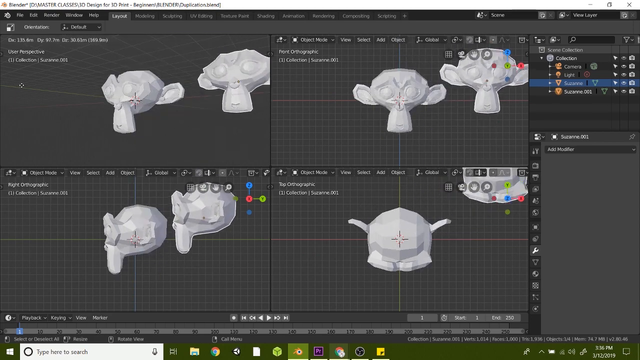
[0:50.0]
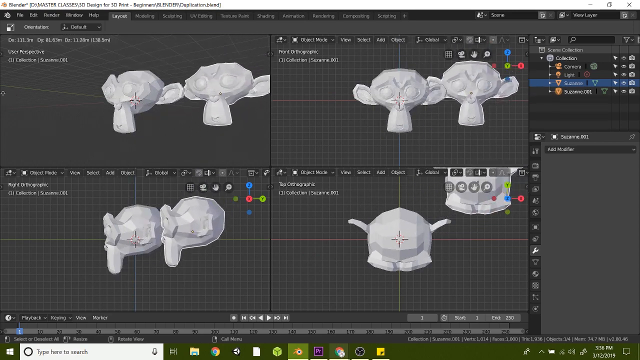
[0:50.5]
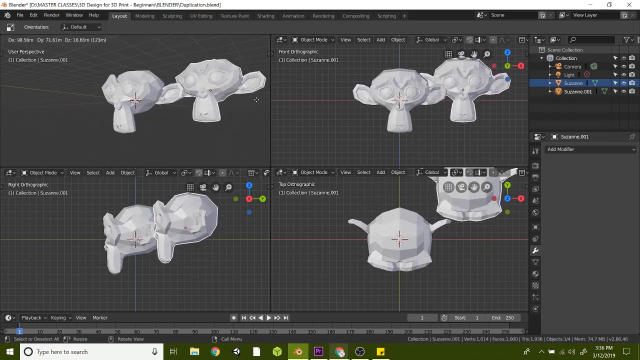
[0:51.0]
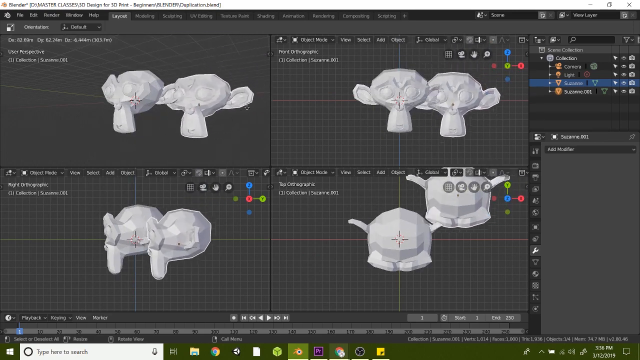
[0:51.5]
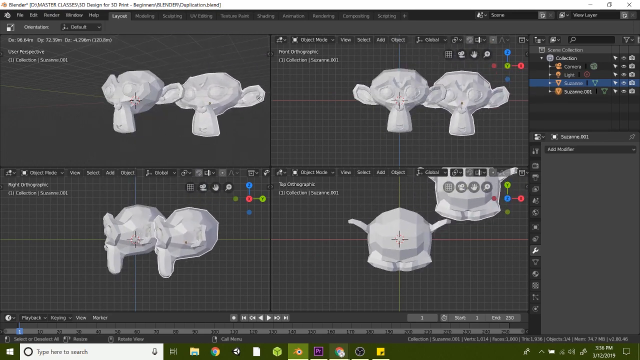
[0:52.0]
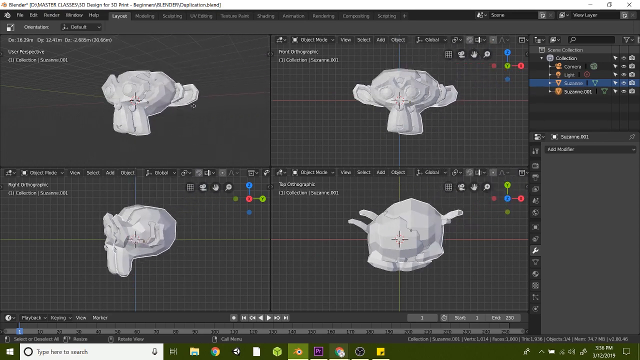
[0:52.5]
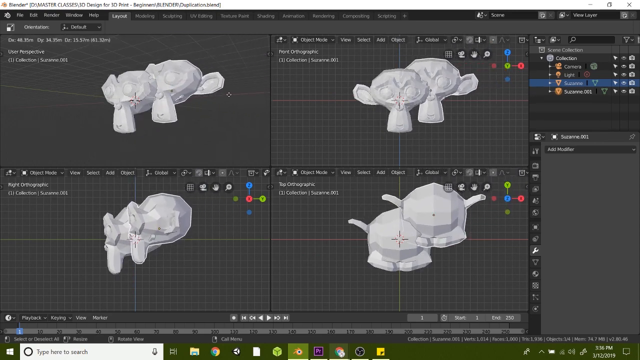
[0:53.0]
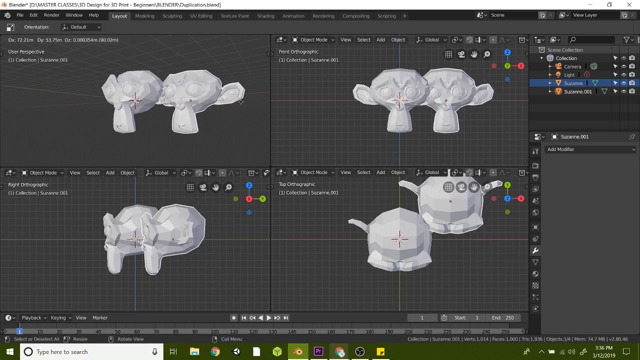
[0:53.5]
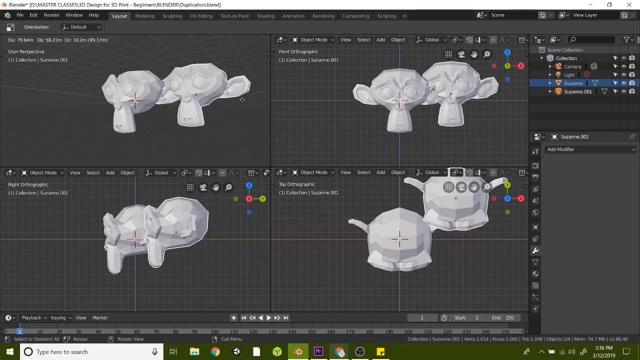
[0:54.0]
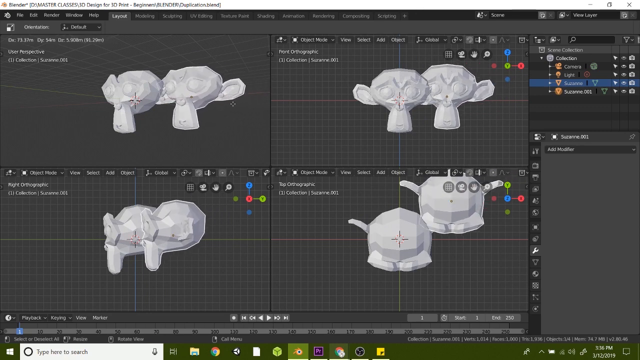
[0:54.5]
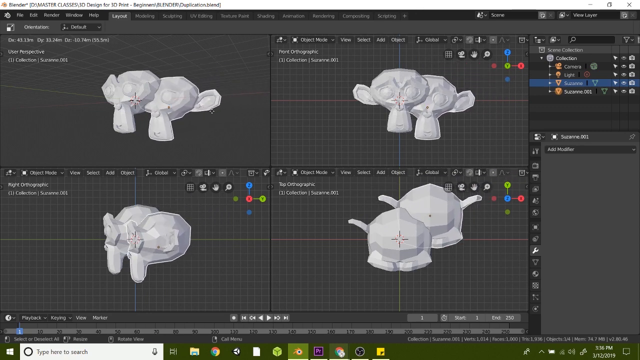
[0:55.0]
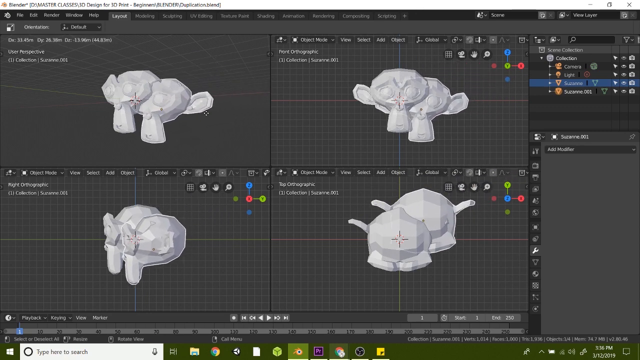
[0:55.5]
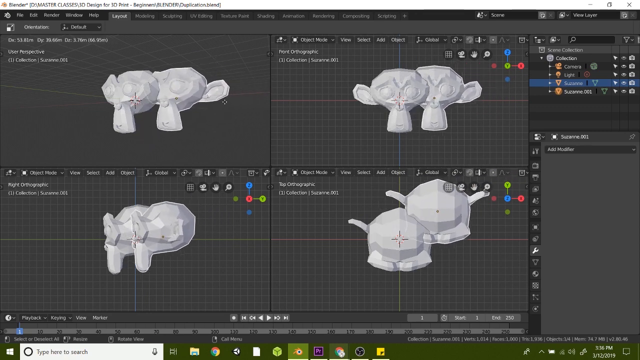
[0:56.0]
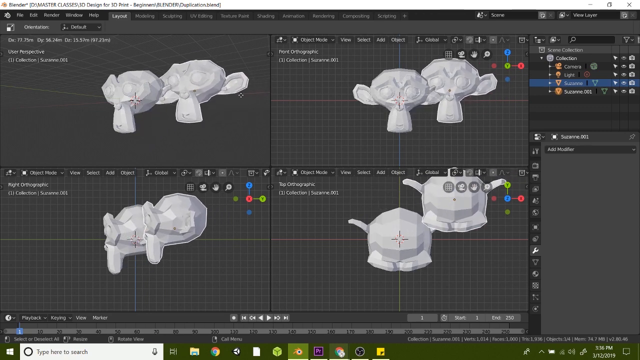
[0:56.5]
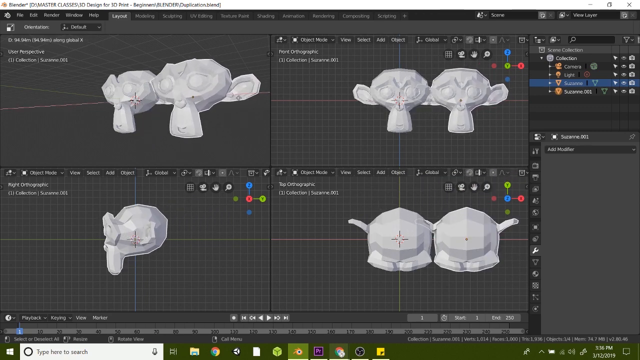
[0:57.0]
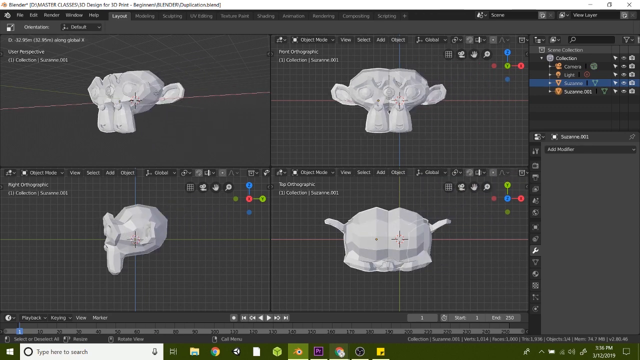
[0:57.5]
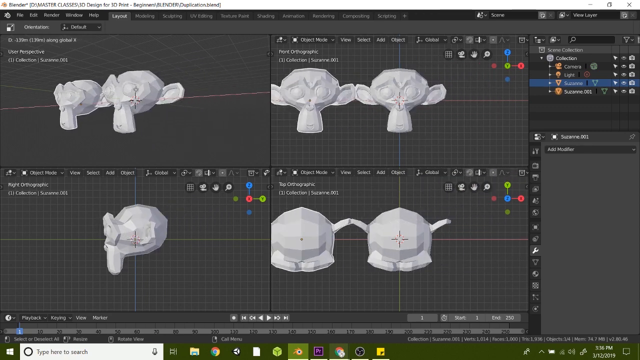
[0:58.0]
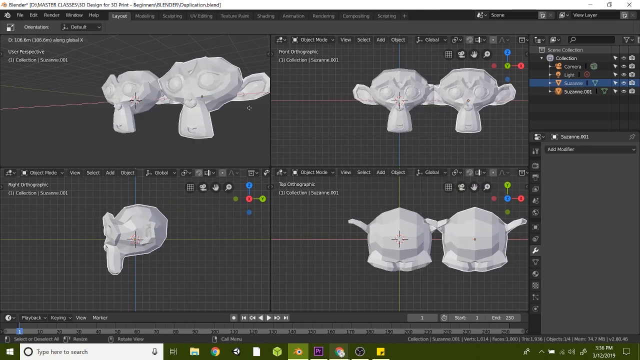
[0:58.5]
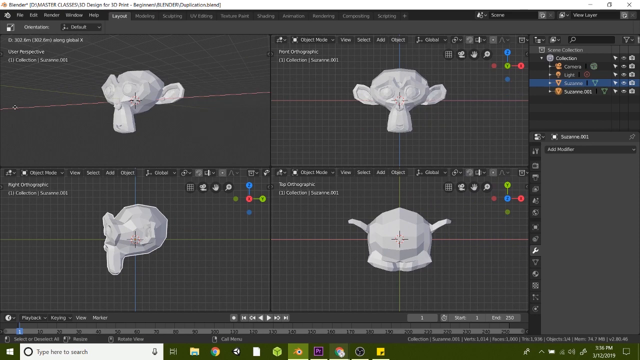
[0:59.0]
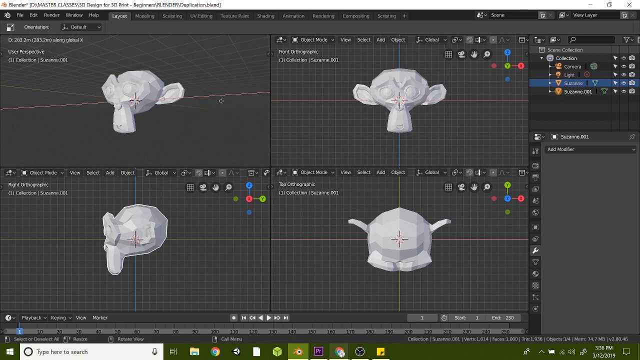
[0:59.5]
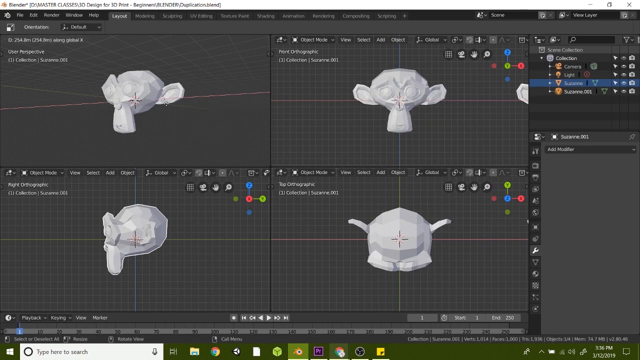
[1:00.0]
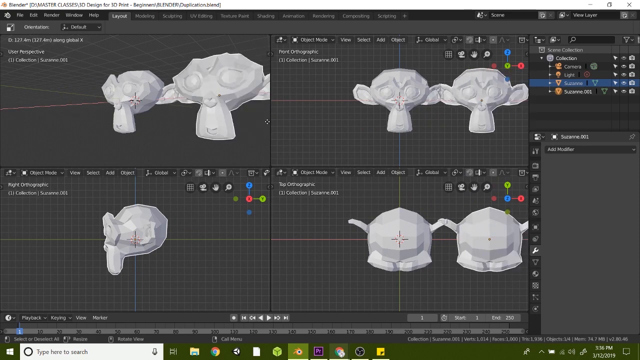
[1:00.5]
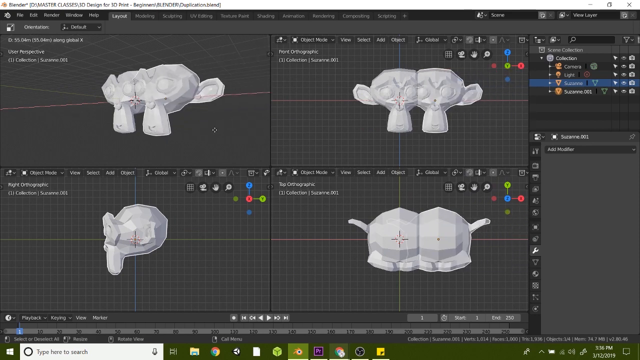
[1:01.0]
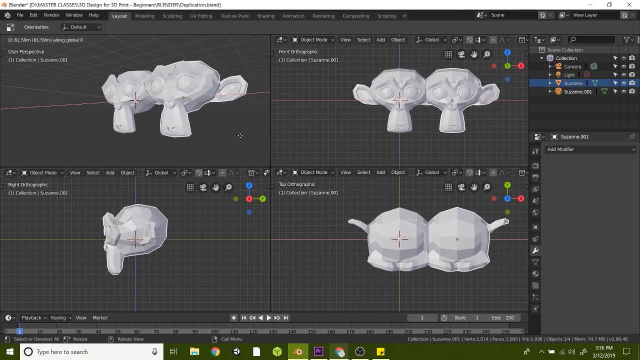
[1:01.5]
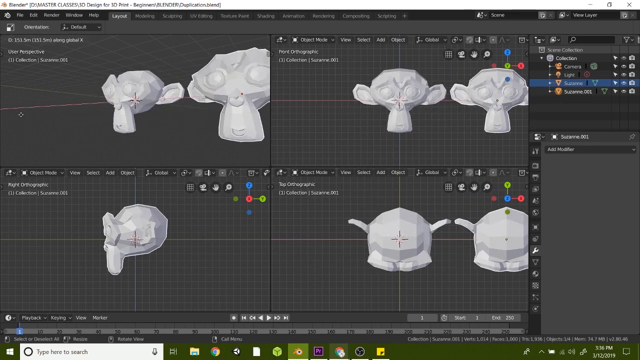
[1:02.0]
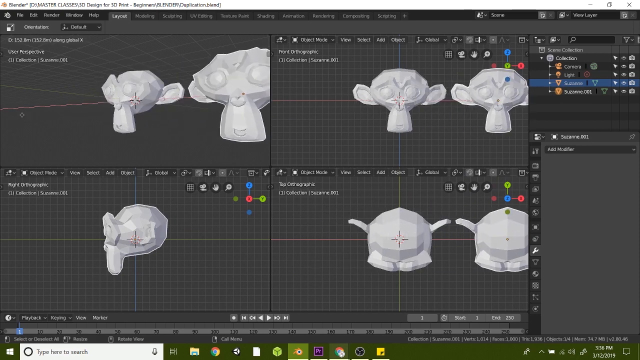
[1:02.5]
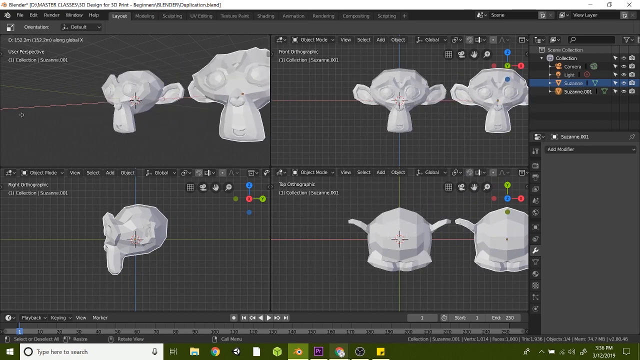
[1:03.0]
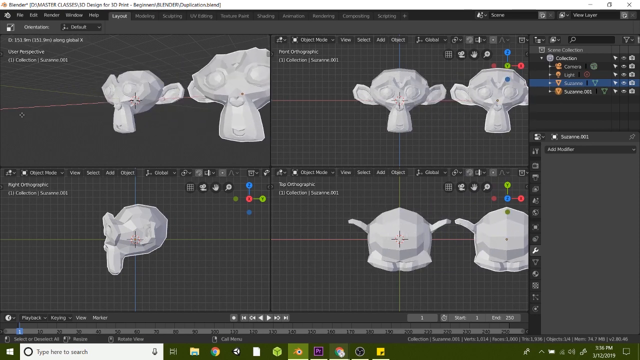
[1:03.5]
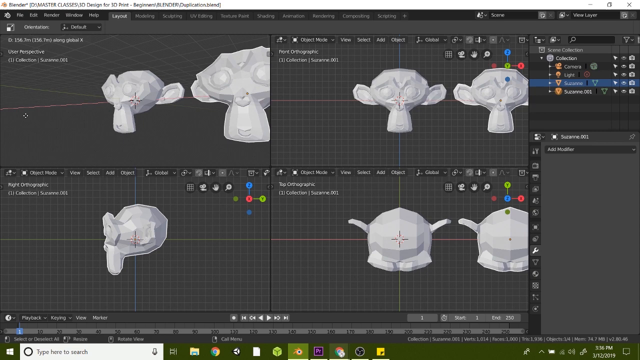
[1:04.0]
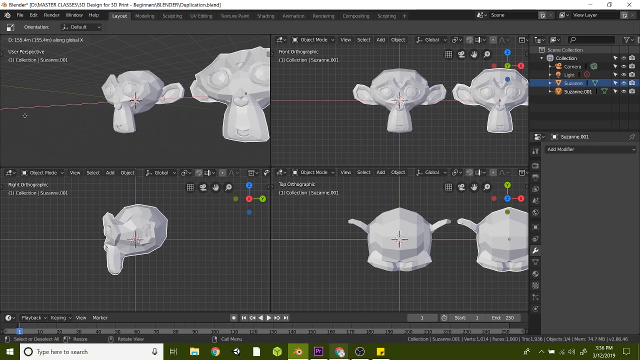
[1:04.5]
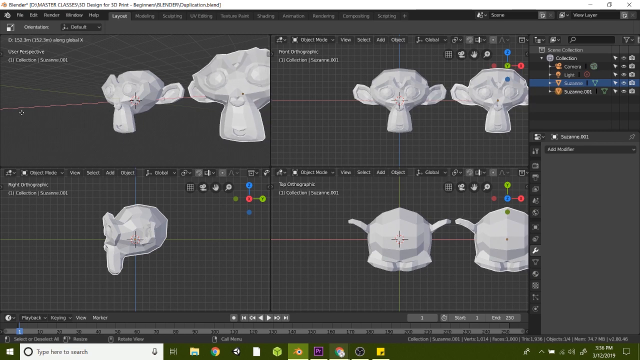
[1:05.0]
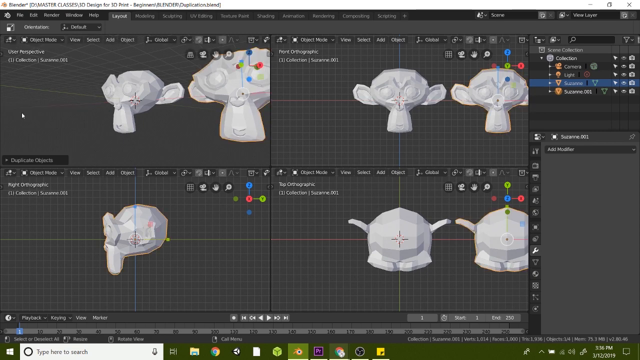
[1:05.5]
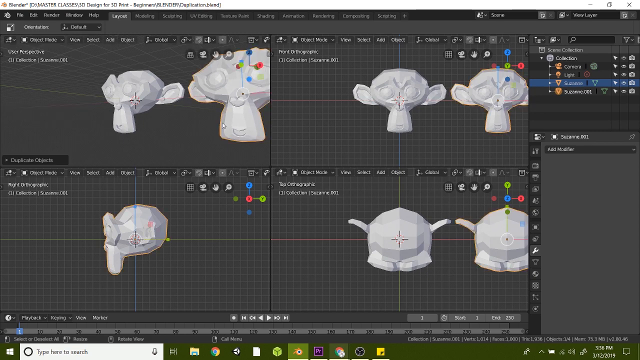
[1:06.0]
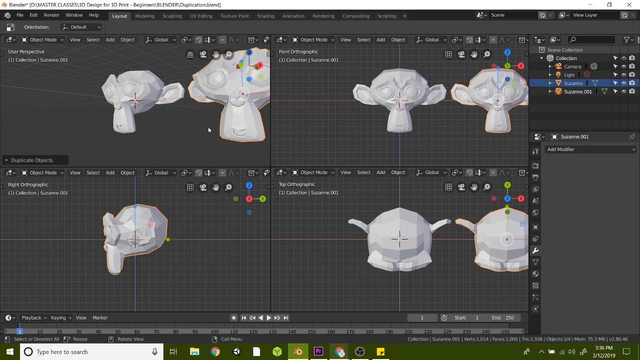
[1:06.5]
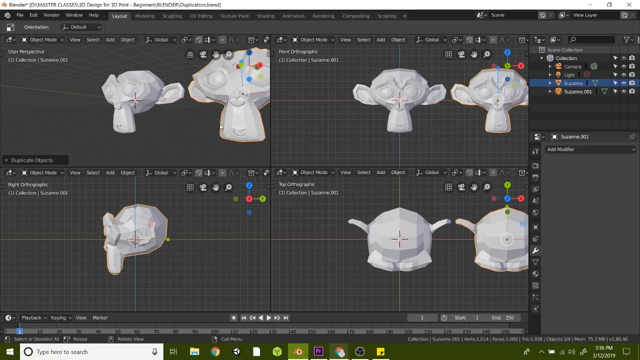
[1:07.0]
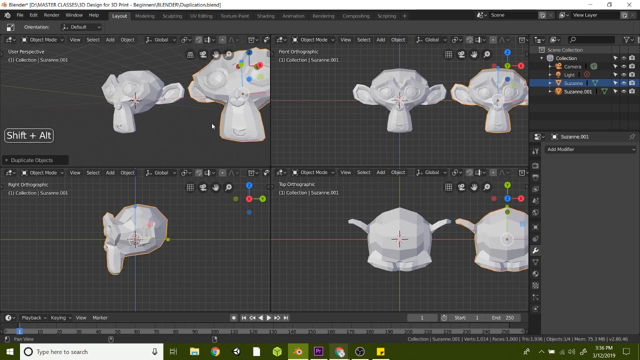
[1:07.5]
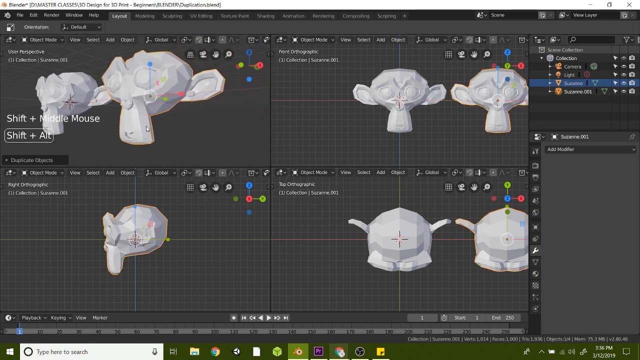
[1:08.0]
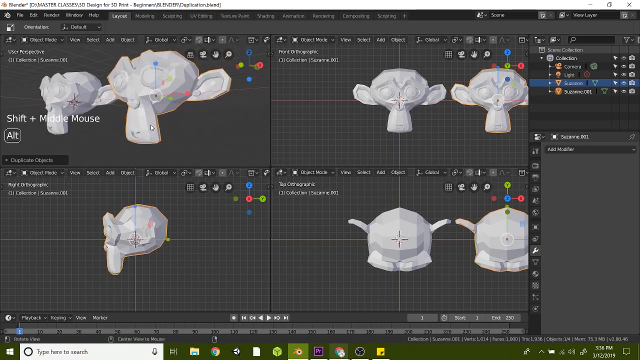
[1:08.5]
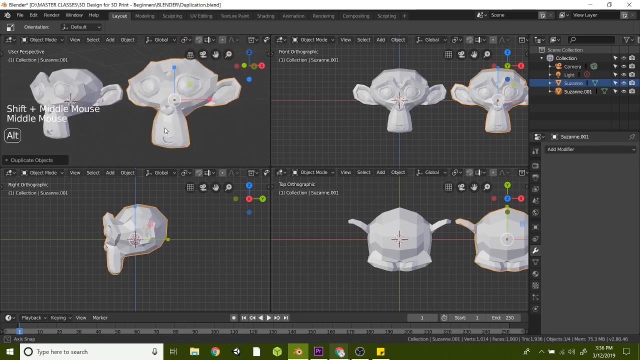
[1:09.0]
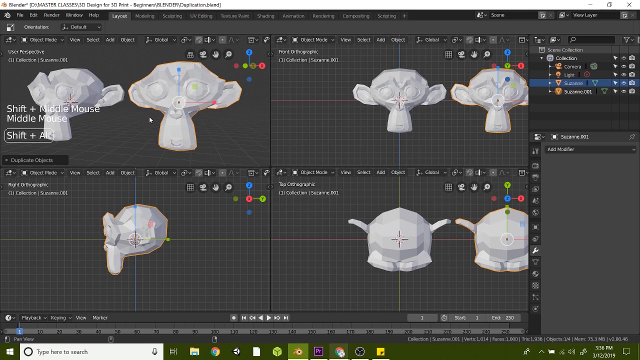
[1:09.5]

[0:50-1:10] The man appears to be teaching how to copy and paste in Blender. He seems to know what he is doing.